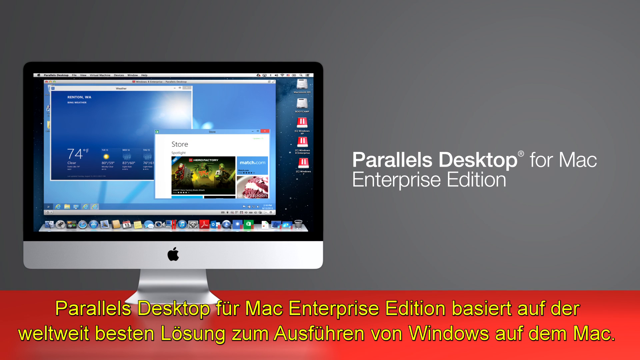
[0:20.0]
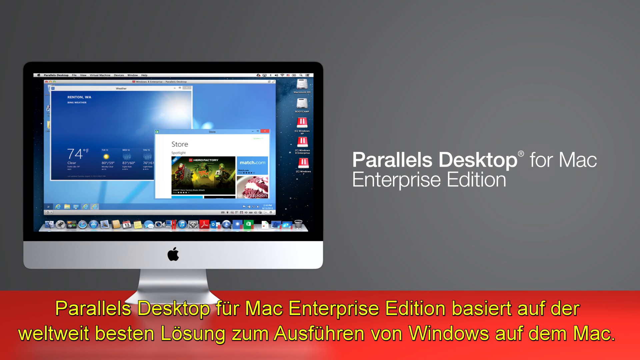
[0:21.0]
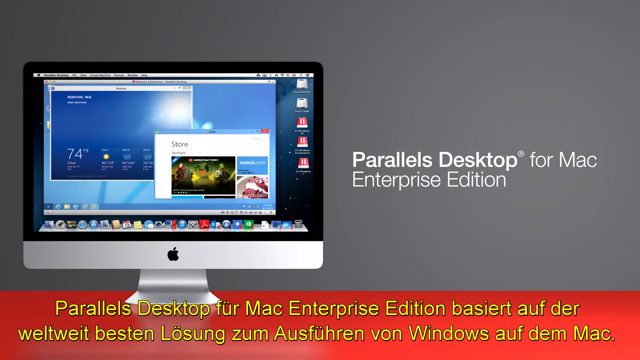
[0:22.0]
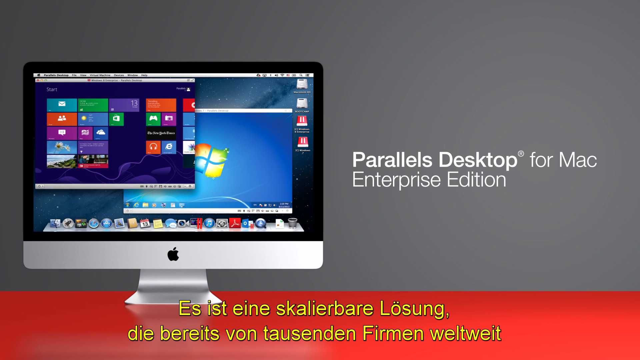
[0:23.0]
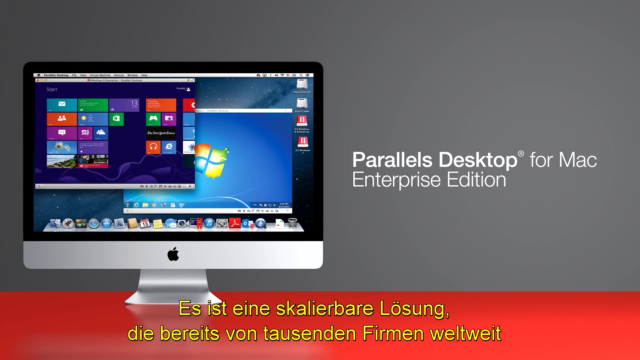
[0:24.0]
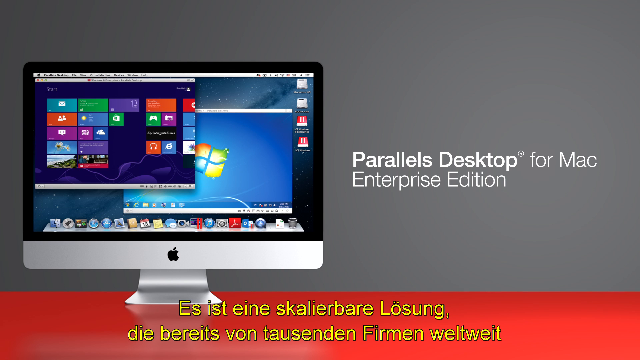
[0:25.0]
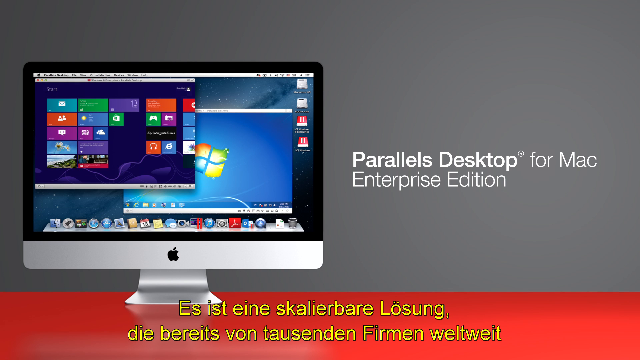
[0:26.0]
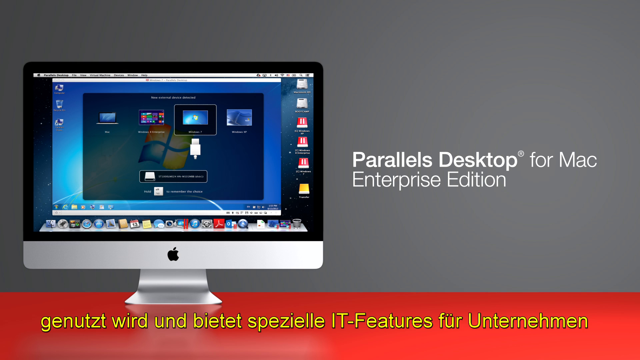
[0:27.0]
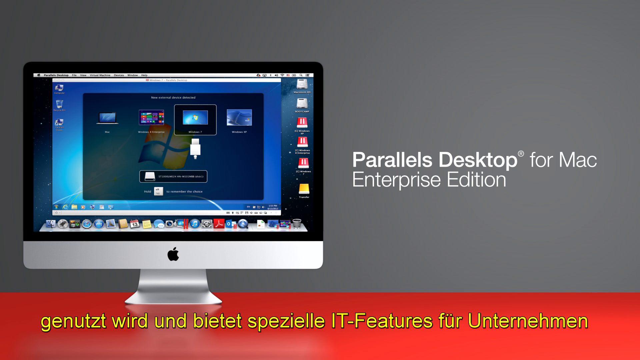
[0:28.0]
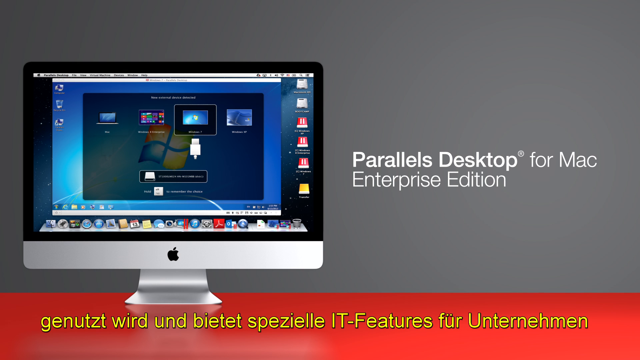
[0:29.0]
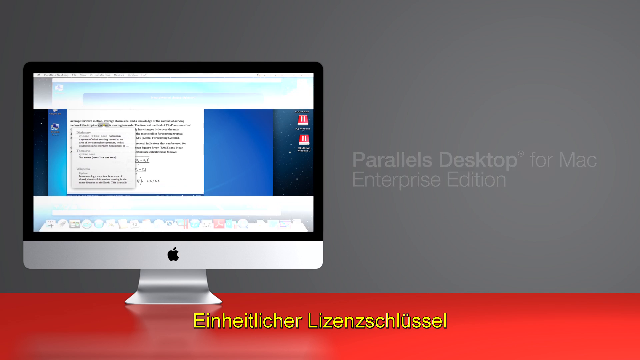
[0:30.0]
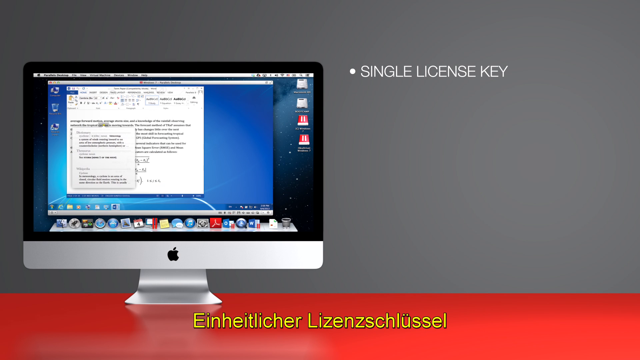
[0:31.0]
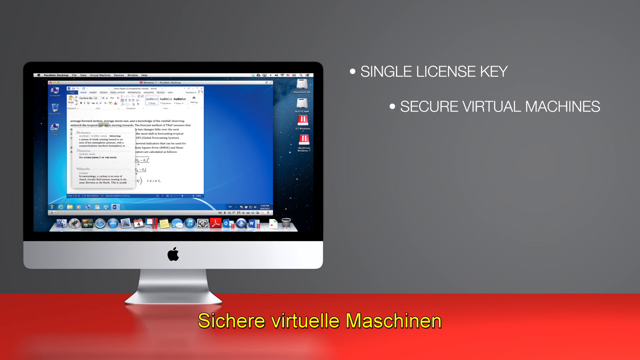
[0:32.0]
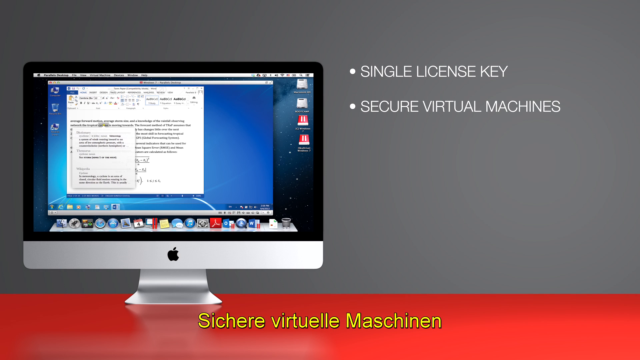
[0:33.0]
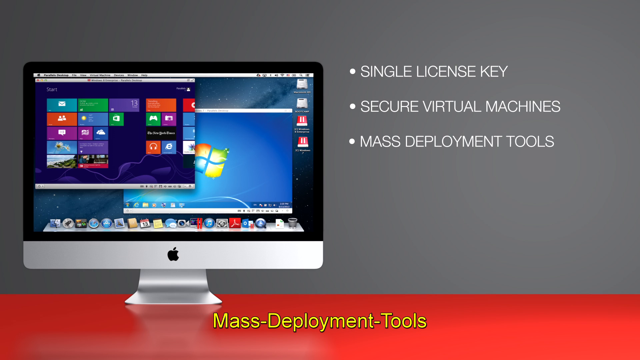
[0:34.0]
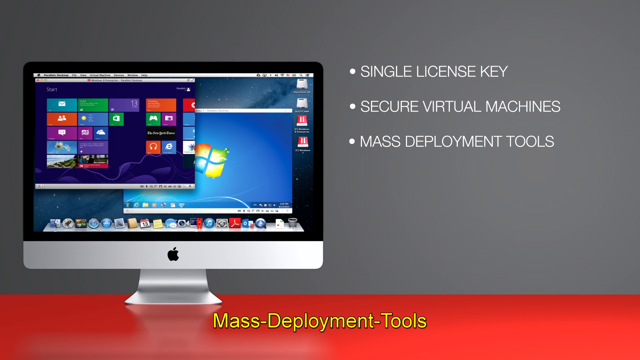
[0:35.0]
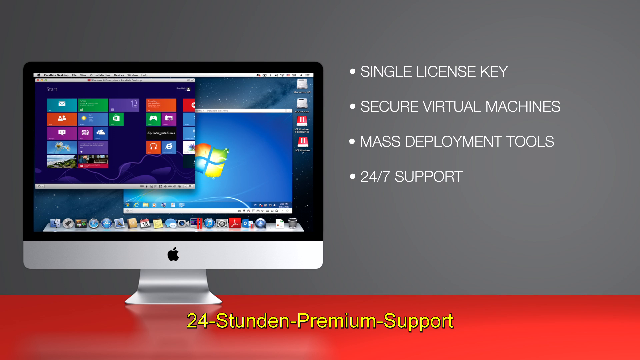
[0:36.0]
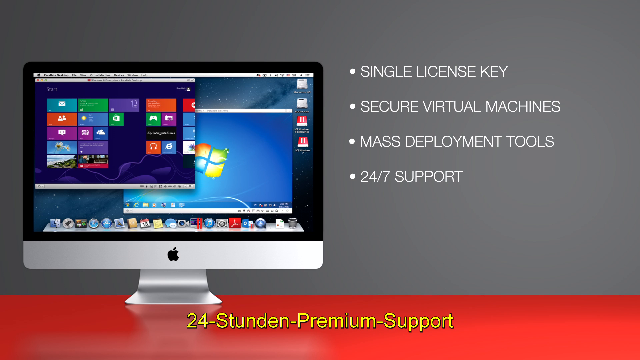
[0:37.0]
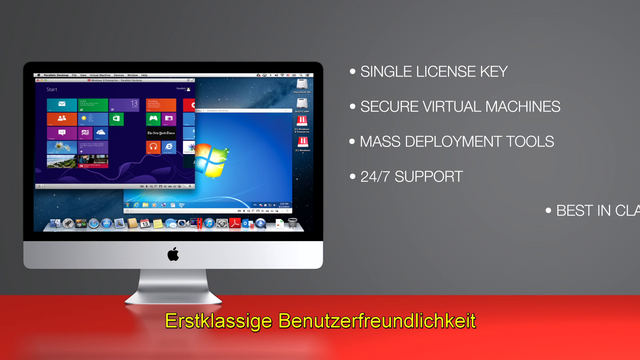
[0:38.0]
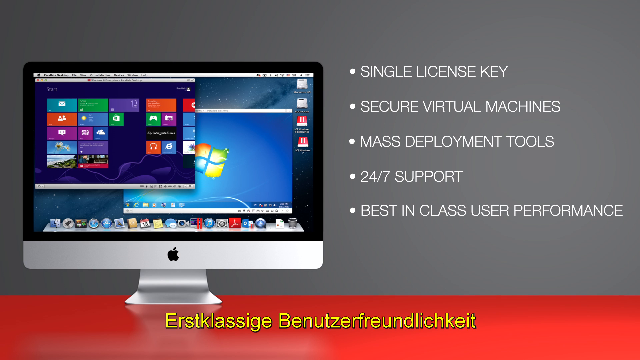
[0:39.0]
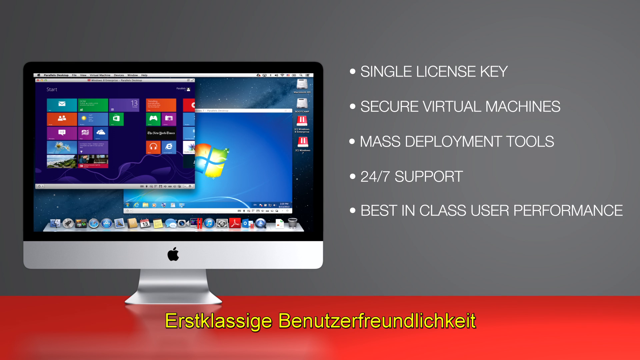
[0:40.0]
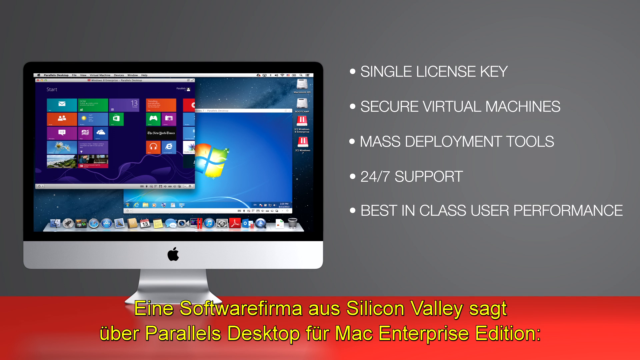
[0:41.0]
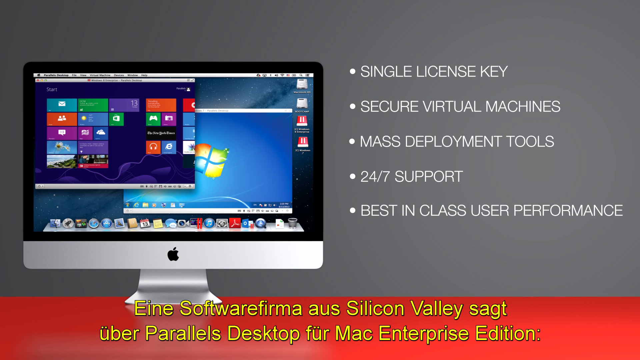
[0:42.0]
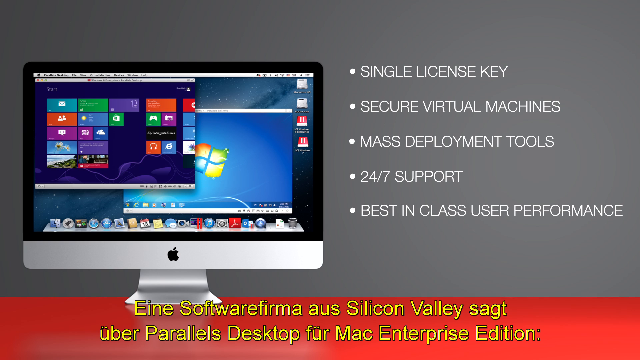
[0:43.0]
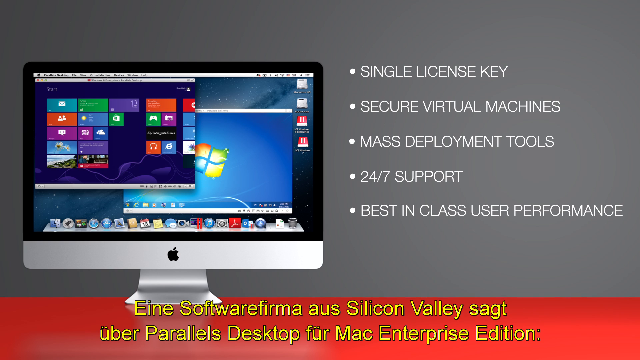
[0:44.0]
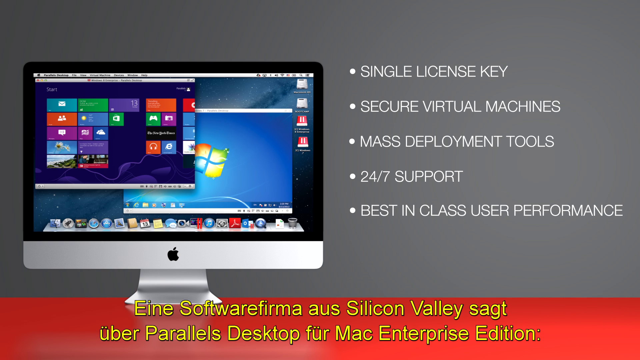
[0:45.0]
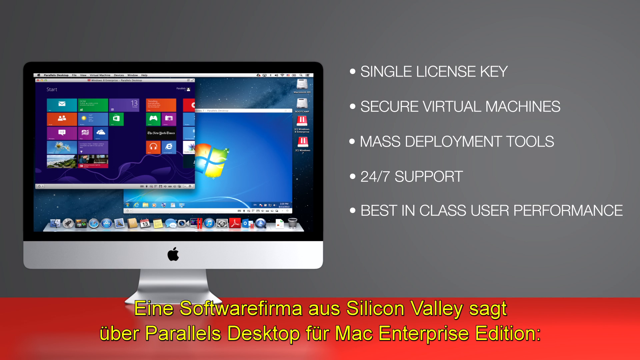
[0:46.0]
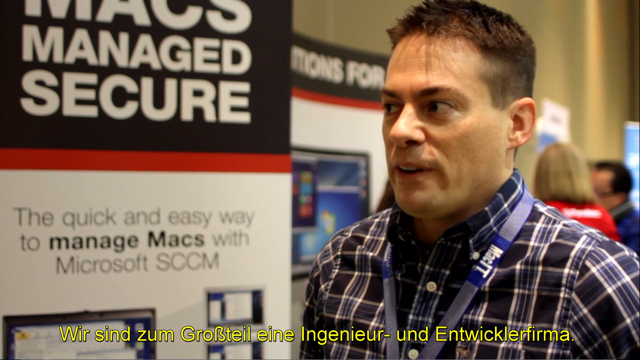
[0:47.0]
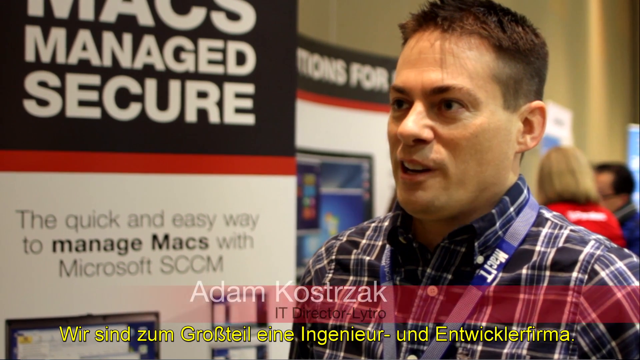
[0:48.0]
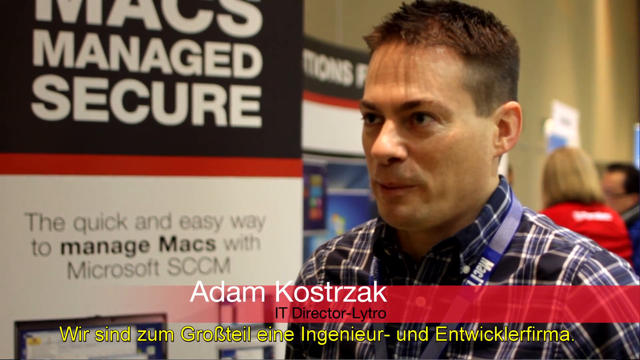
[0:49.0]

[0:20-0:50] The scene opens with Parallels Desktop for Mac Enterprise Edition and shows a picture of a screen. At the bottom, text that seems to be German appears, and as the screen changes, the words underneath change. After a while, English appears in the top part: white dots with white lettering against a gray background, with the Mac against a gray background, reading "Single License Key", "Secure Virtual Machines", "Mass Deployment Tools", "24-7 Support" and "Best-in-Class User Performance", scrolled onto the screen one at a time. A man named Adam Kostroskak is talking, with German translation underneath and the text "a quick and easy way to manage Macs with Microsoft SCCM". A physical panel on the right-hand side reads "Macs Manage Secure", and what looks like a red thing is in the background. The man wears what looks like a plaid shirt with a lanyard, has very short dark brown or black hair, and is clean shaven.